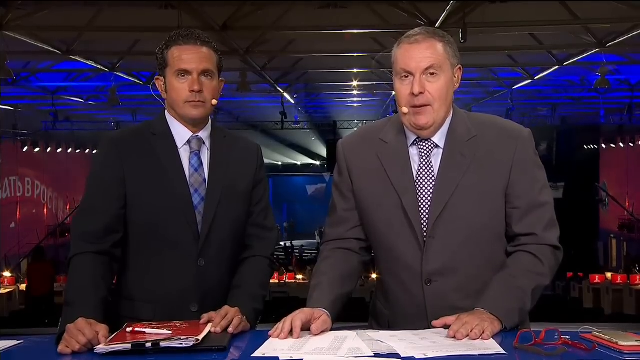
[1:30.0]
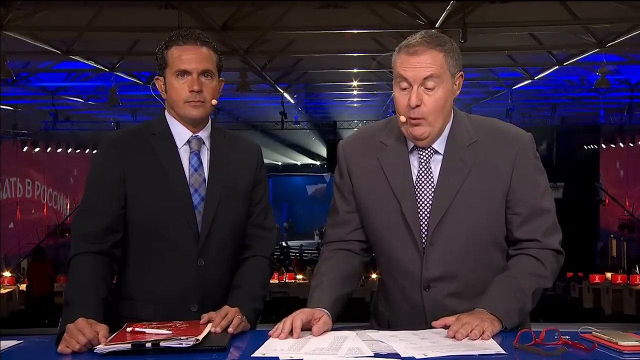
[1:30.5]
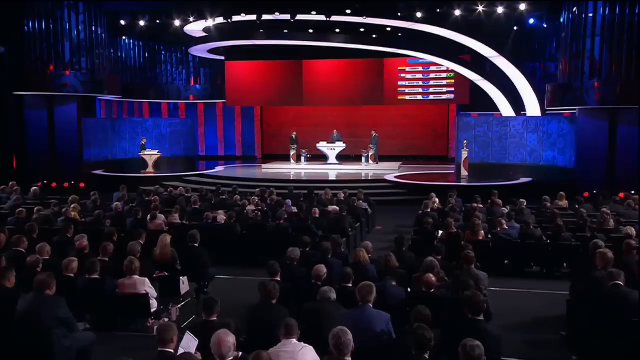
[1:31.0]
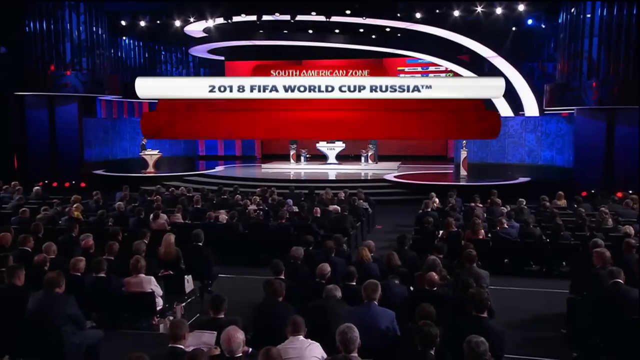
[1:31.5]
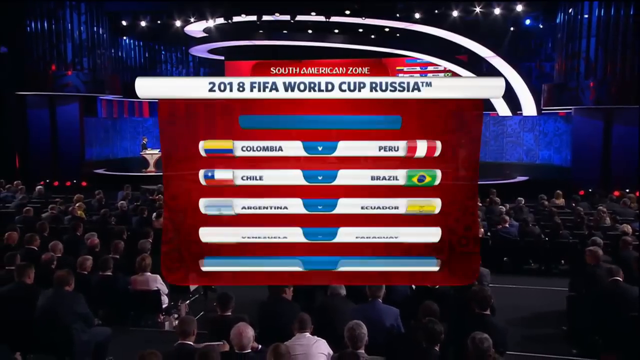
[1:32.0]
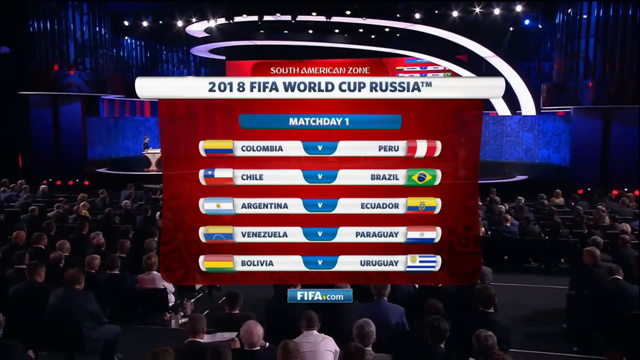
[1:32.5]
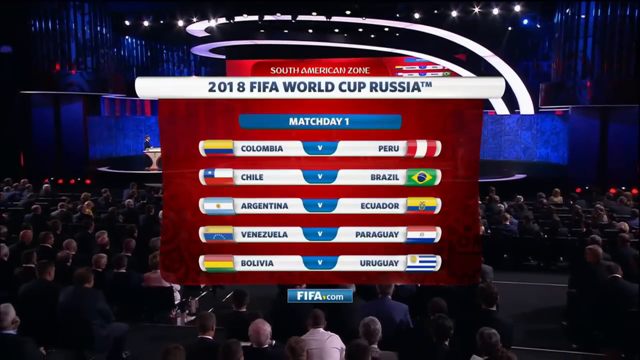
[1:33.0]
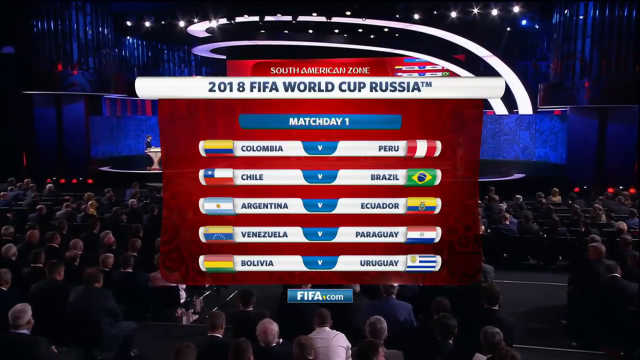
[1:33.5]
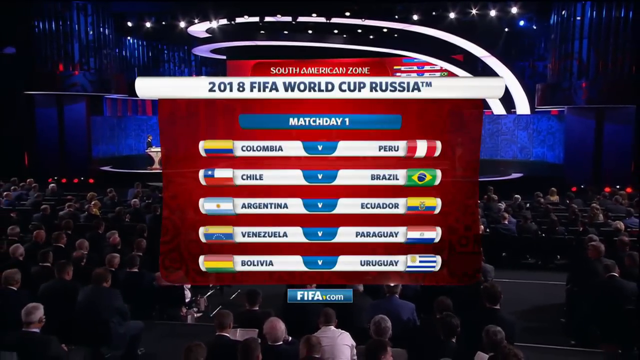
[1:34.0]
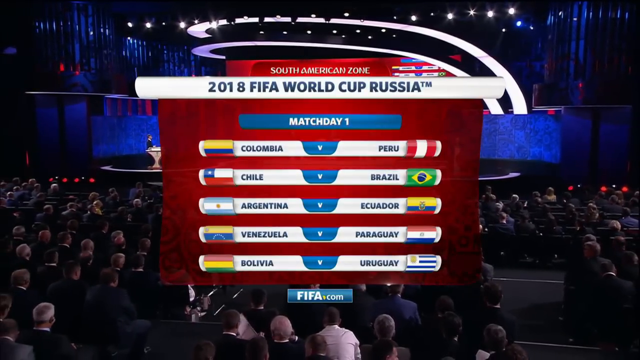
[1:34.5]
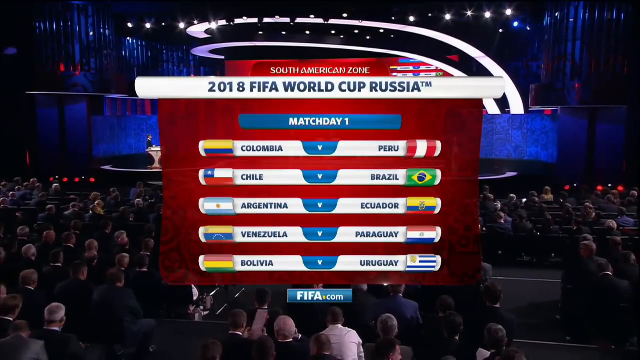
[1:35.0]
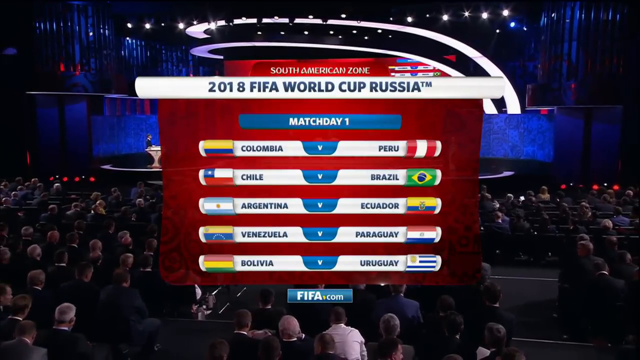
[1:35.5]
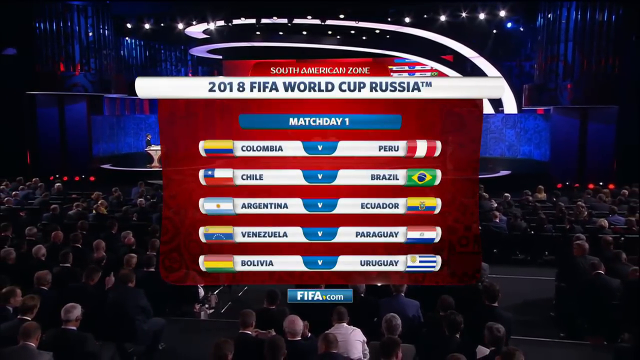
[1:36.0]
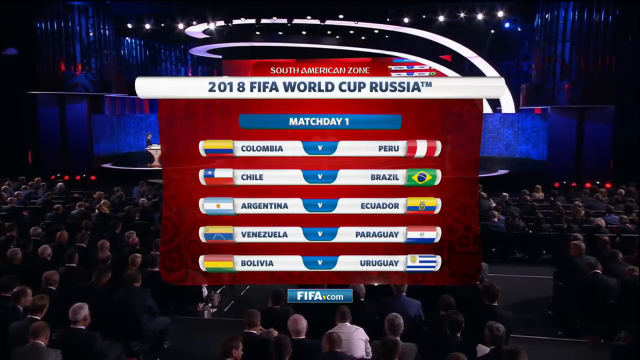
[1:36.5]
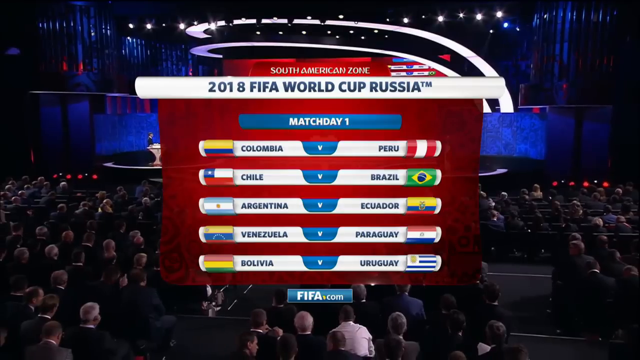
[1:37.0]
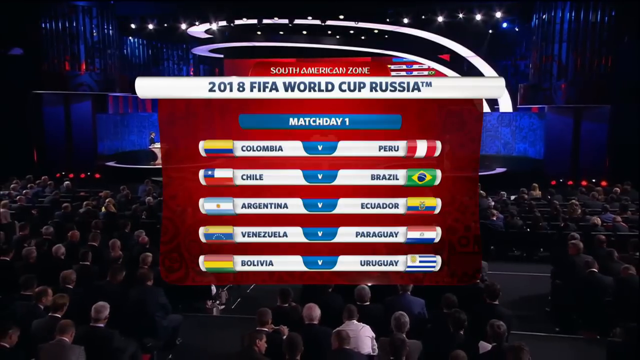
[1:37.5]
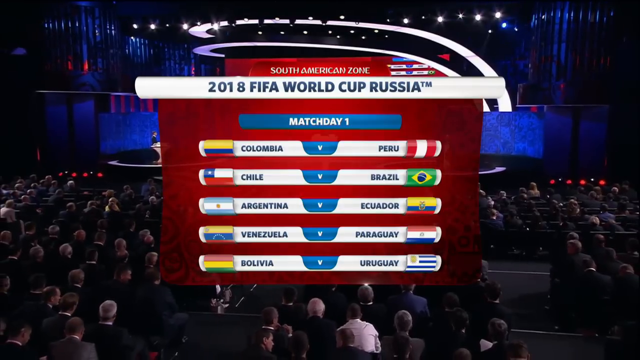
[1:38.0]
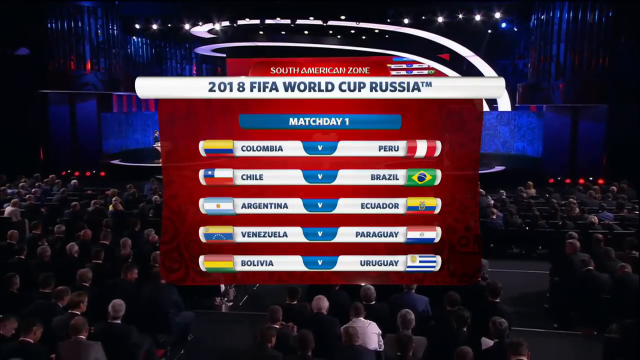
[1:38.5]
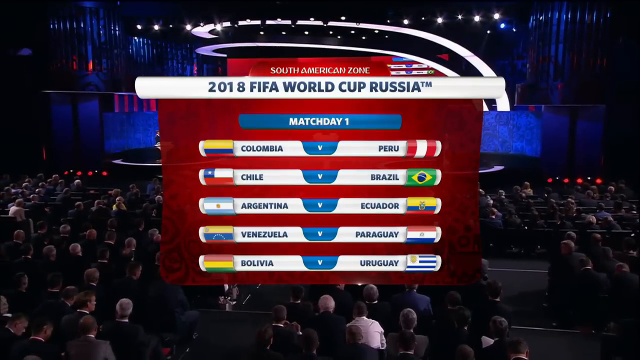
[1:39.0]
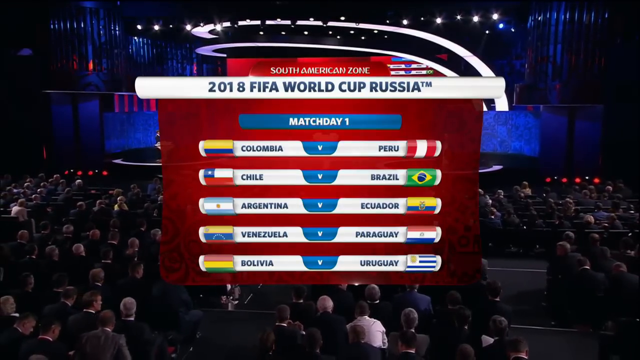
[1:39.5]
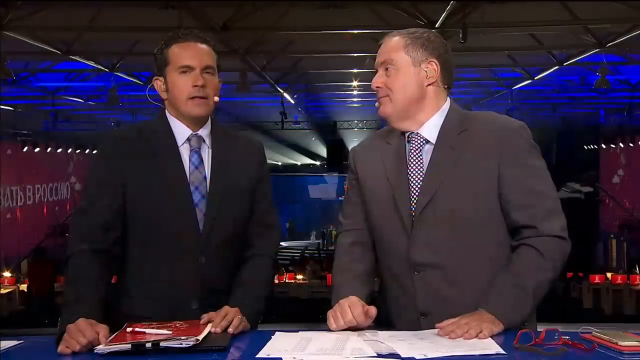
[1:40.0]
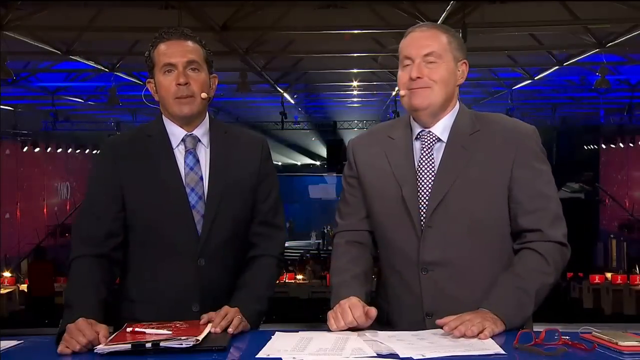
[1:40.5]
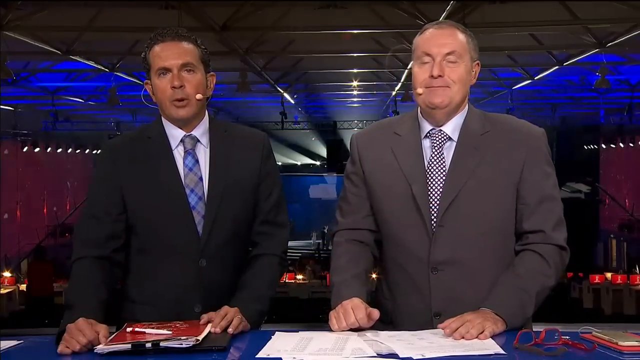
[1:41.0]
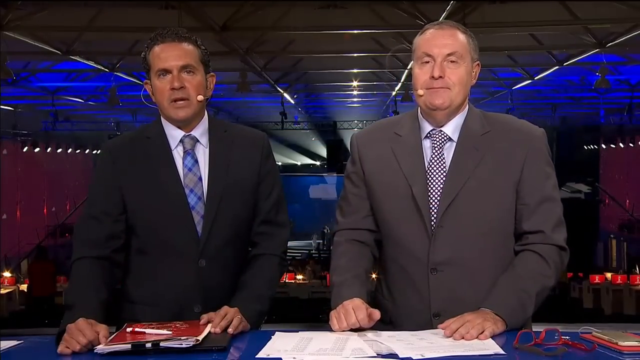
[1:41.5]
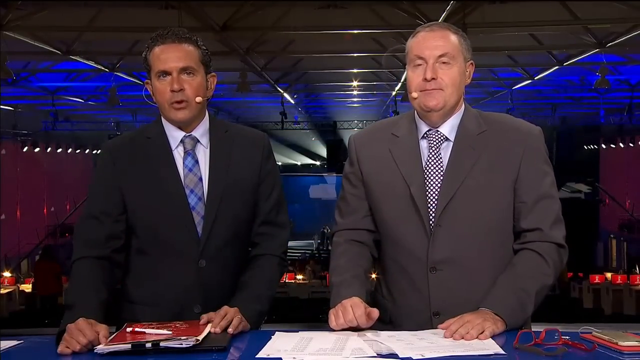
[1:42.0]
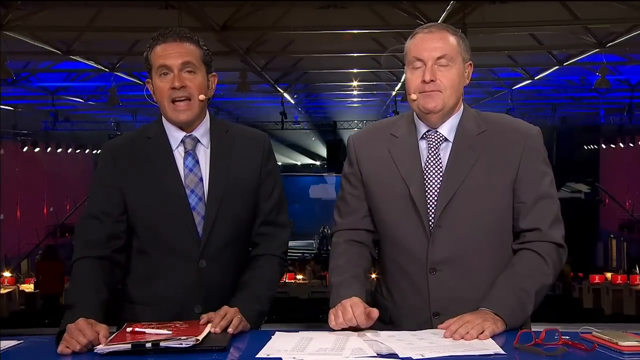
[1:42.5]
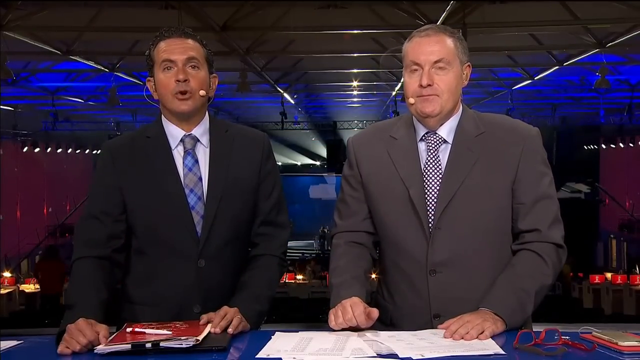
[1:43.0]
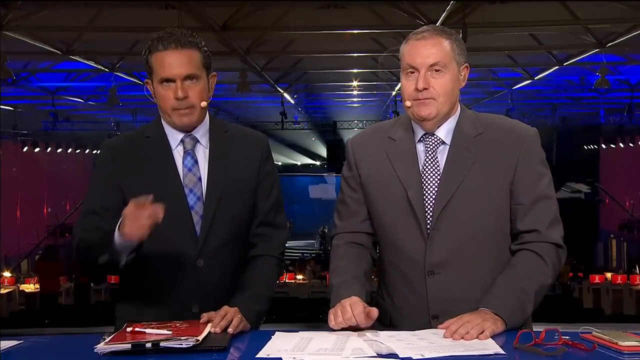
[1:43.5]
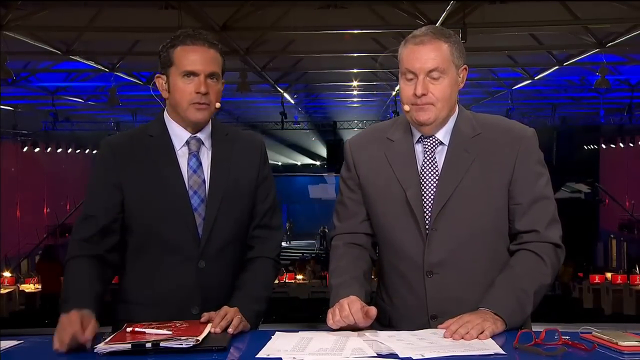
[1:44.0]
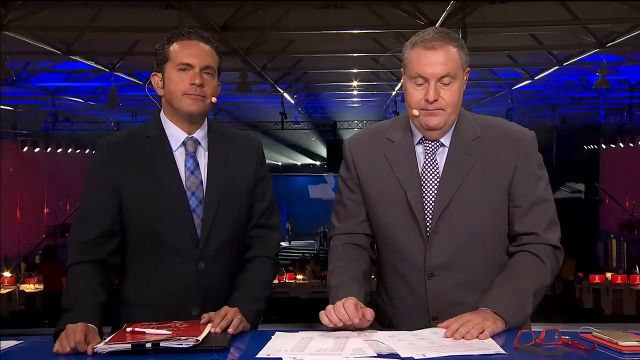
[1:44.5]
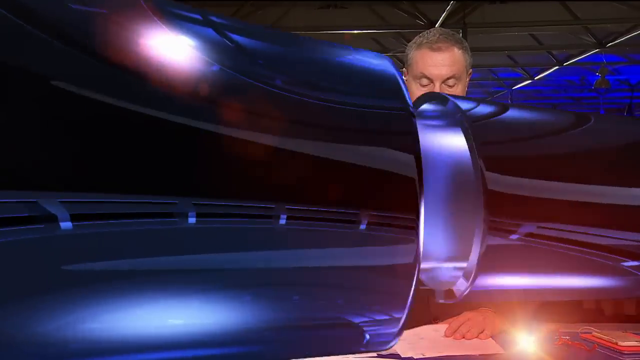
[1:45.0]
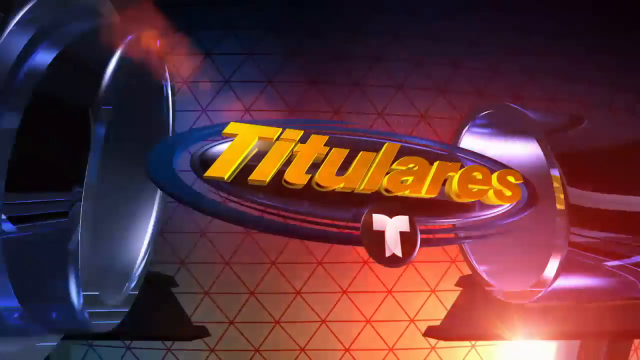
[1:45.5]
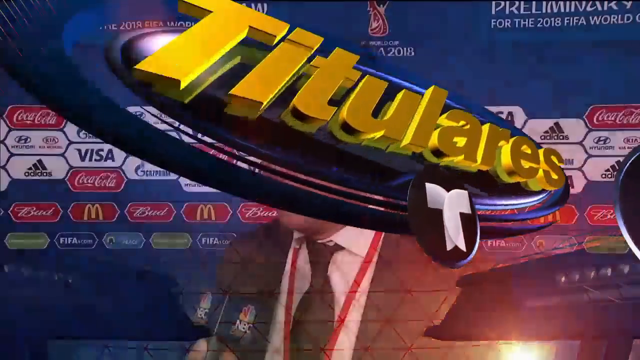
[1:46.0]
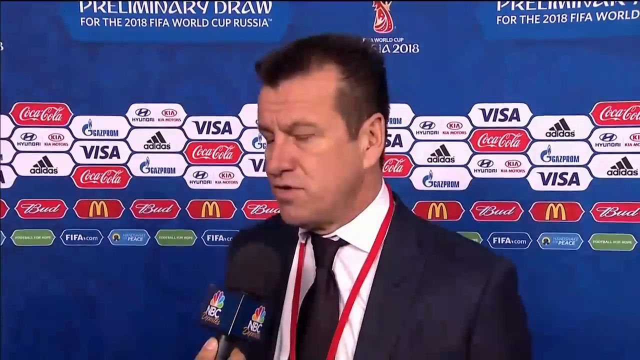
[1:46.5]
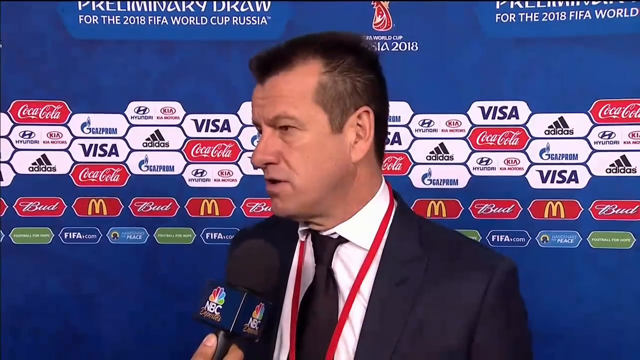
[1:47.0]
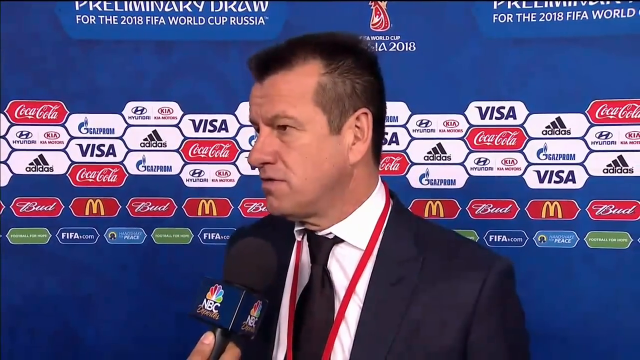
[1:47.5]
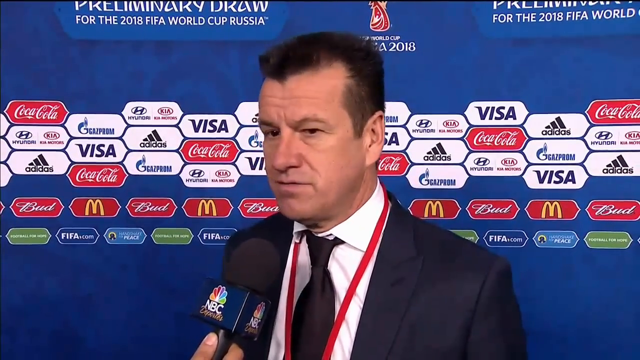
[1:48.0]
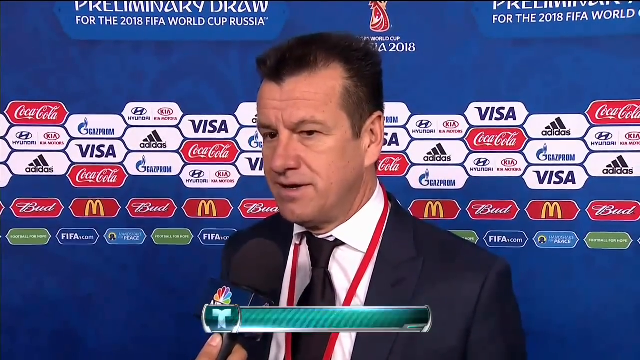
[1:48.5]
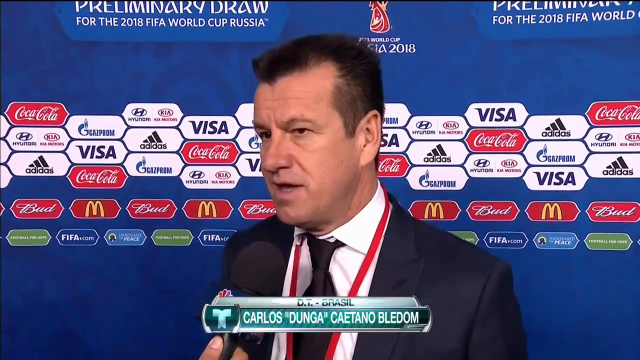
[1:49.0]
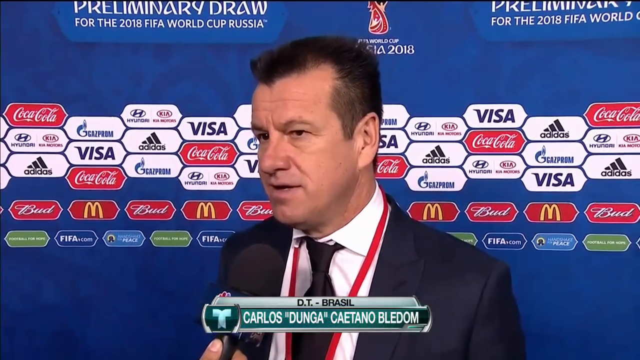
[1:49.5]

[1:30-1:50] The two men, who look to be news broadcasters, continue to be shown. A screen follows with text including "South American zone, 2018 FIFA World Cup, Russia match day one, Colombia versus Peru, Chile versus Brazil, Argentina versus Ecuador, Venezuela versus Paraguay, Bolivia versus Uruguay", with each country's corresponding flag next to it. An animation then shows a word in Spanish with the Telemundo logo underneath it. Next, a man wearing a suit and tie is interviewed, with his title and name at the bottom reading "DT Brazil, Carlos Dunga Caetano Bledum". The video is in a rectangular shape, of good quality, with smooth transitions.